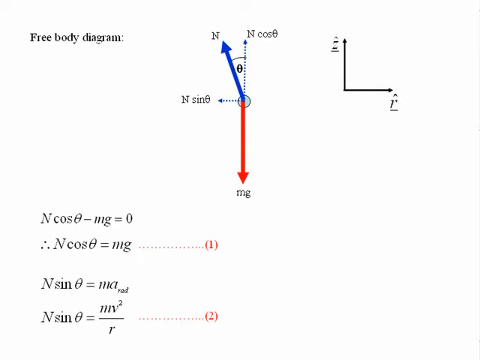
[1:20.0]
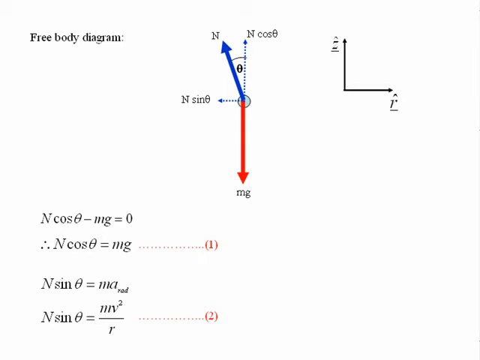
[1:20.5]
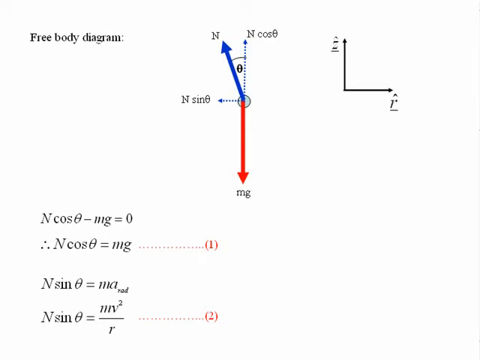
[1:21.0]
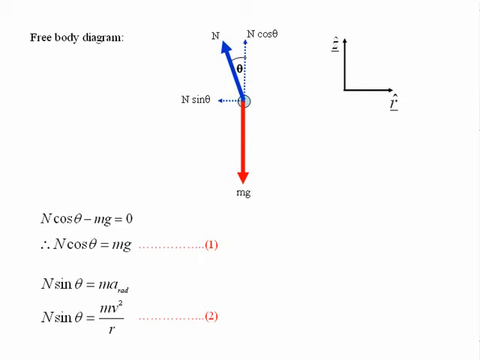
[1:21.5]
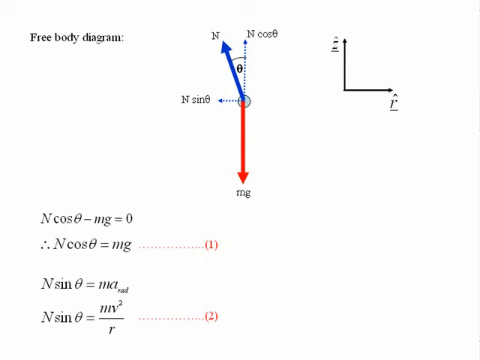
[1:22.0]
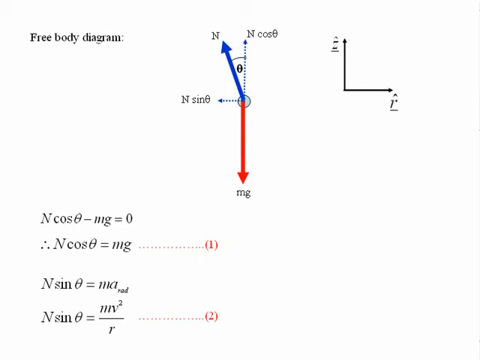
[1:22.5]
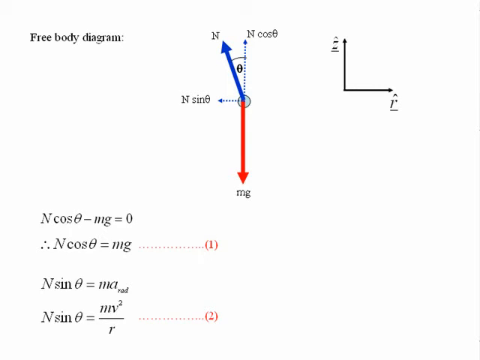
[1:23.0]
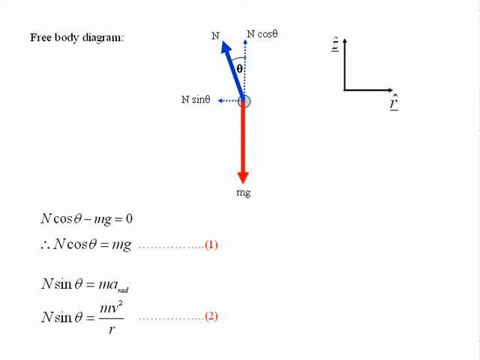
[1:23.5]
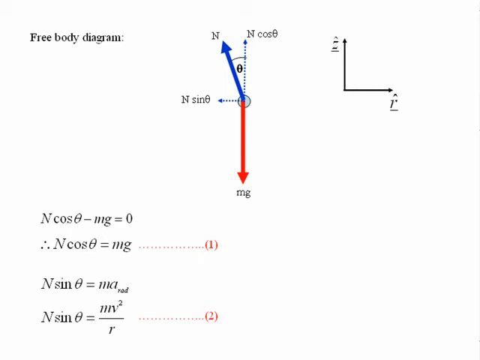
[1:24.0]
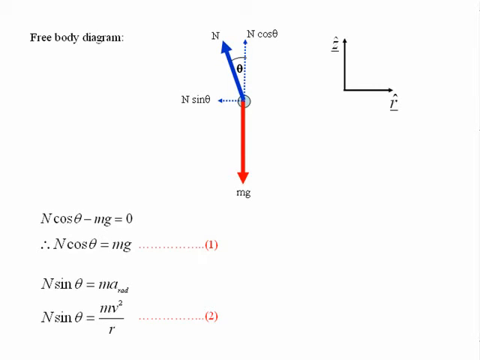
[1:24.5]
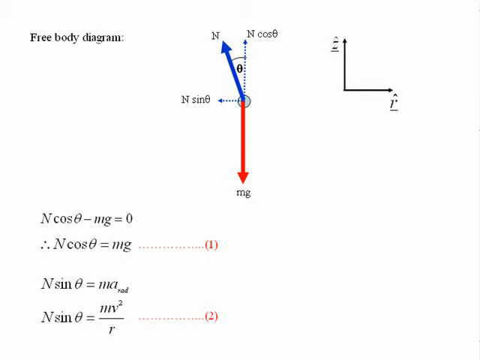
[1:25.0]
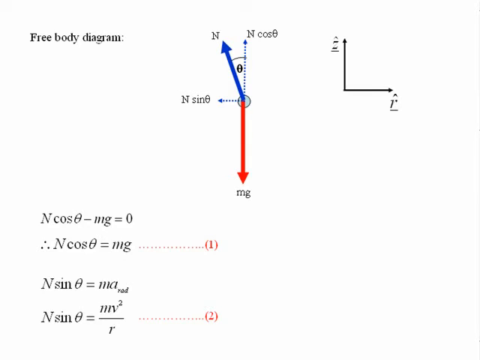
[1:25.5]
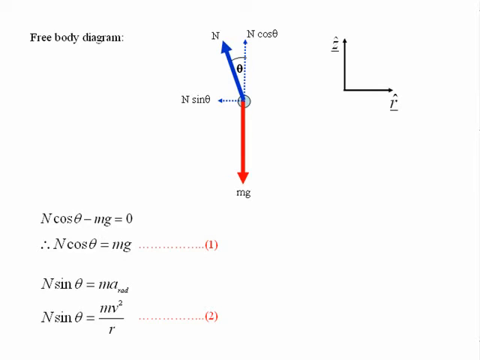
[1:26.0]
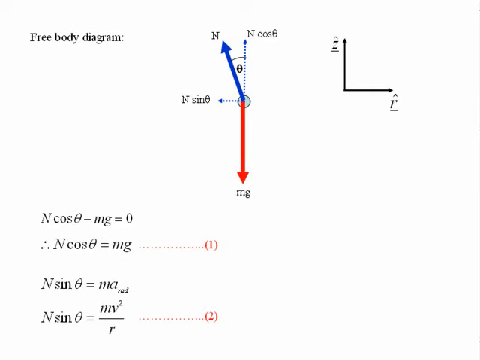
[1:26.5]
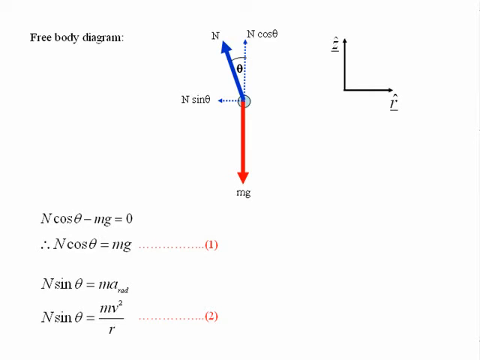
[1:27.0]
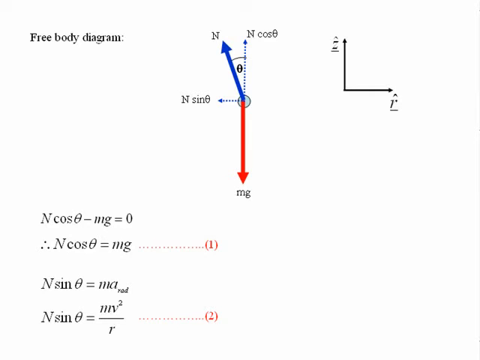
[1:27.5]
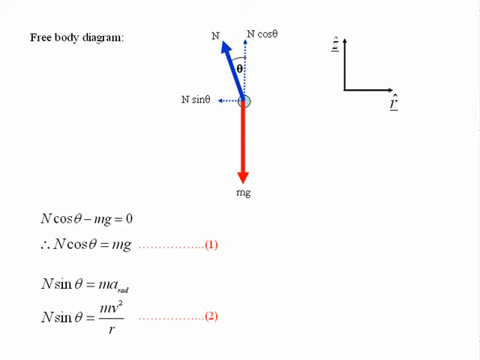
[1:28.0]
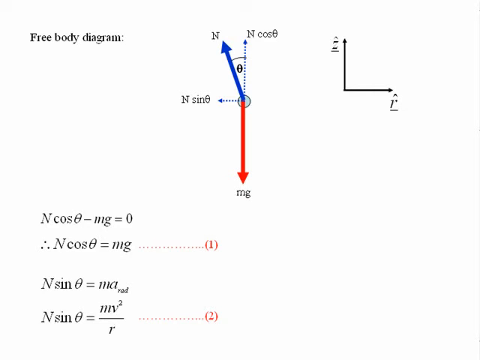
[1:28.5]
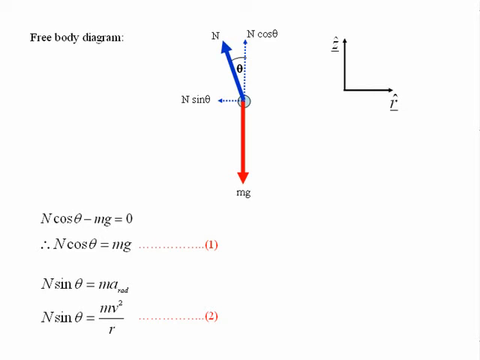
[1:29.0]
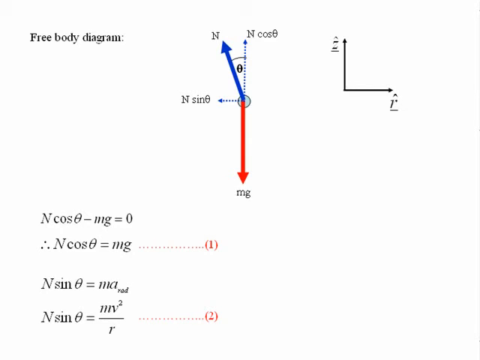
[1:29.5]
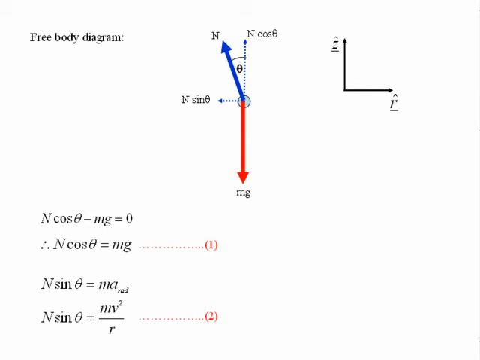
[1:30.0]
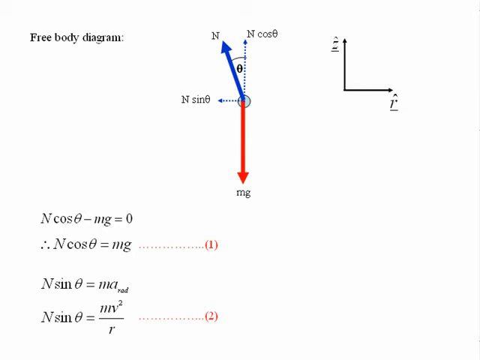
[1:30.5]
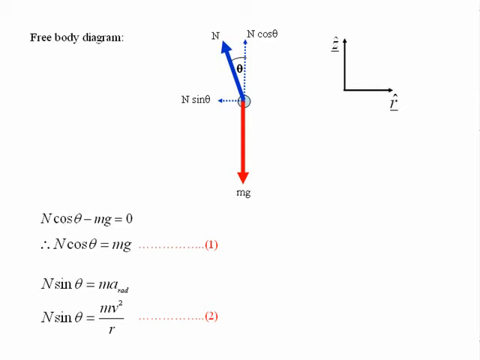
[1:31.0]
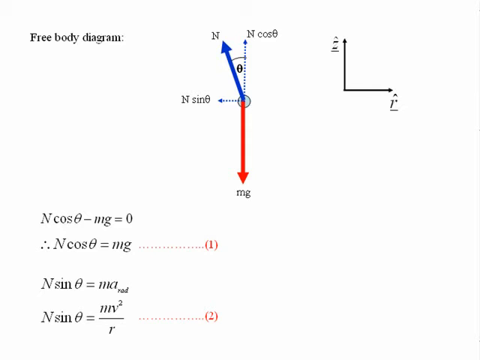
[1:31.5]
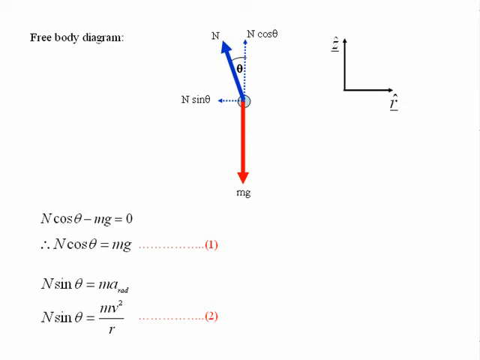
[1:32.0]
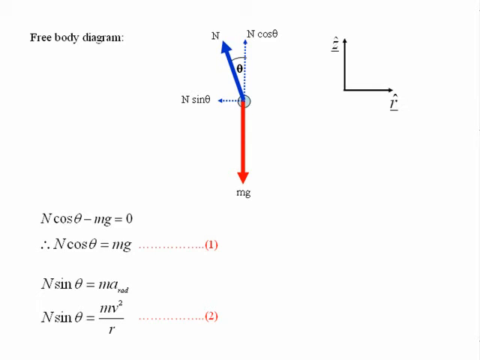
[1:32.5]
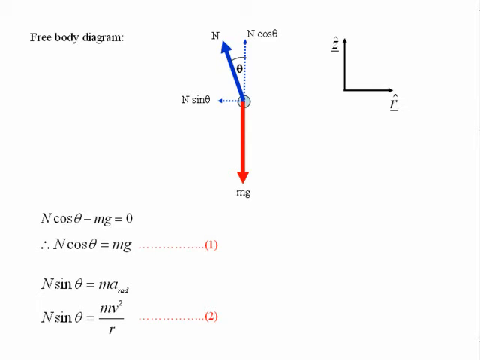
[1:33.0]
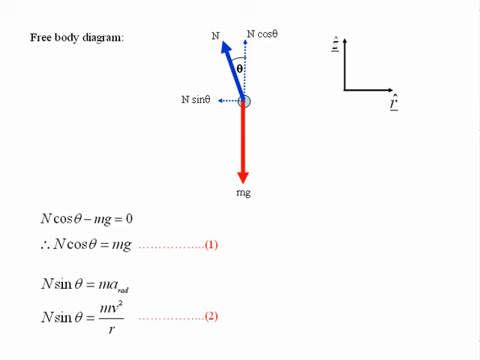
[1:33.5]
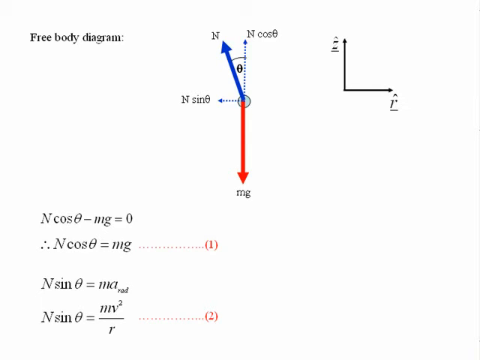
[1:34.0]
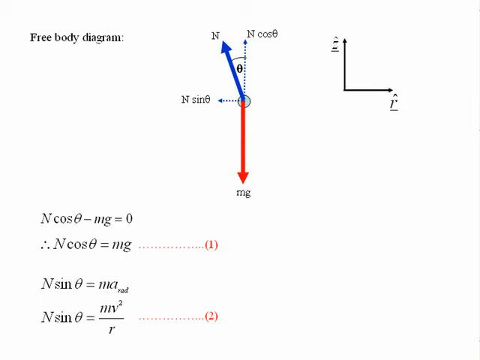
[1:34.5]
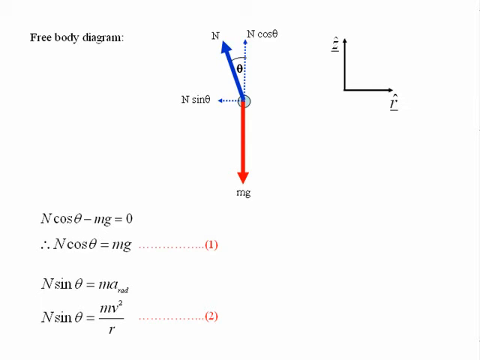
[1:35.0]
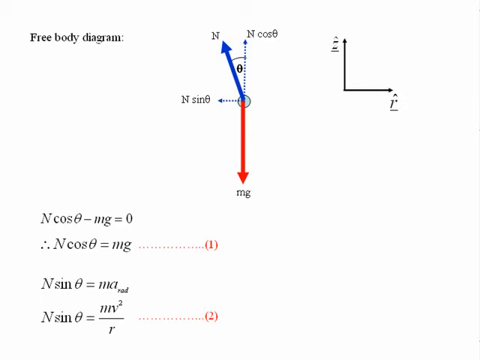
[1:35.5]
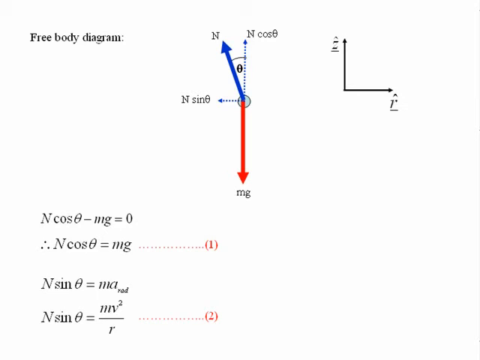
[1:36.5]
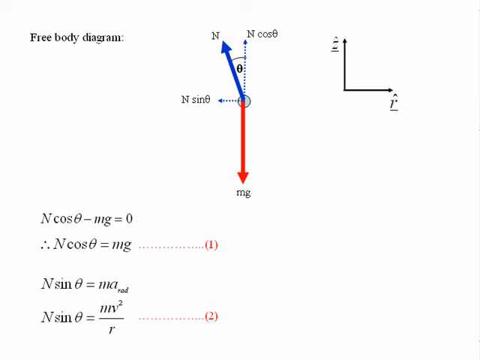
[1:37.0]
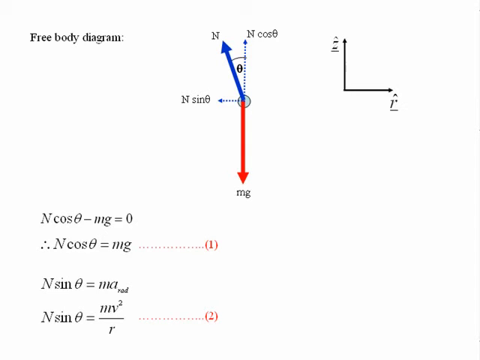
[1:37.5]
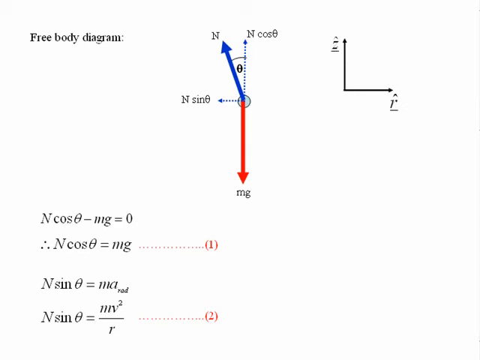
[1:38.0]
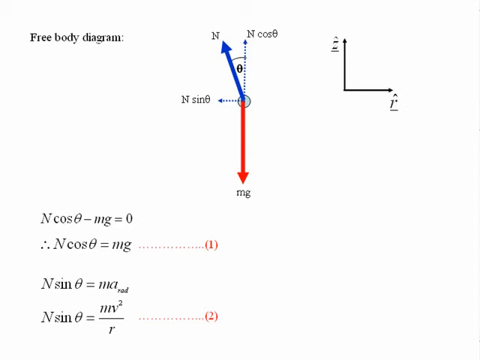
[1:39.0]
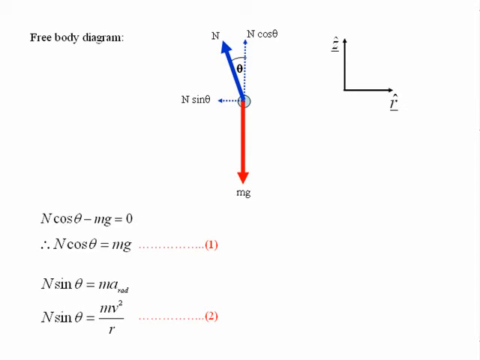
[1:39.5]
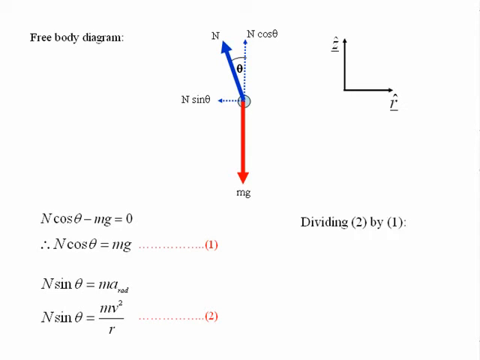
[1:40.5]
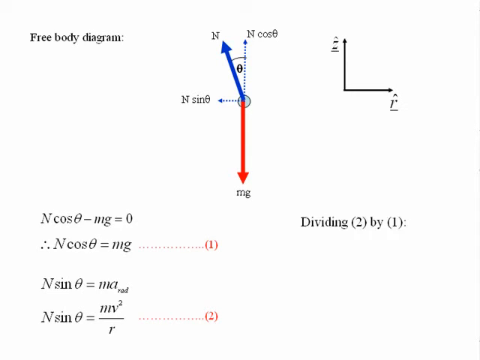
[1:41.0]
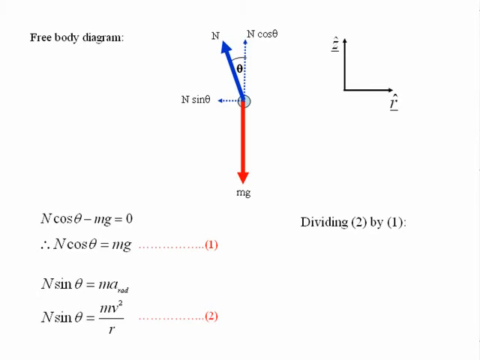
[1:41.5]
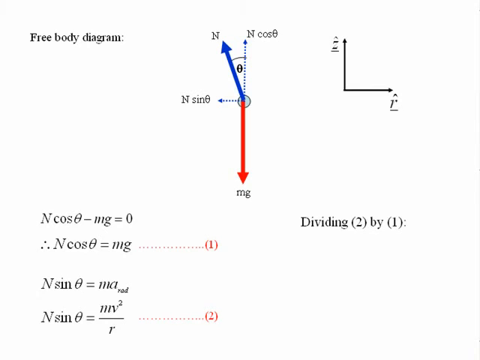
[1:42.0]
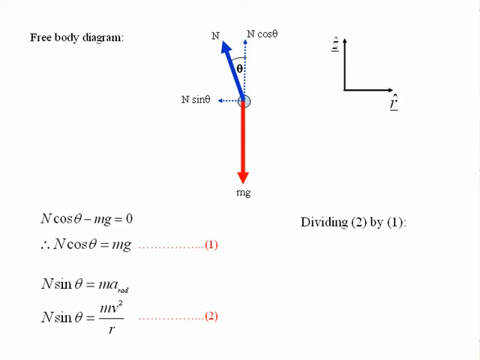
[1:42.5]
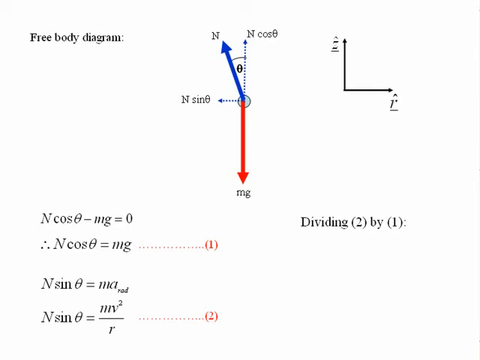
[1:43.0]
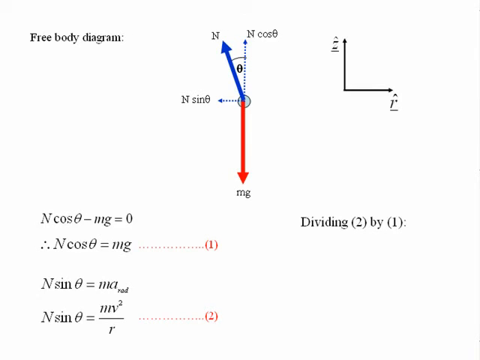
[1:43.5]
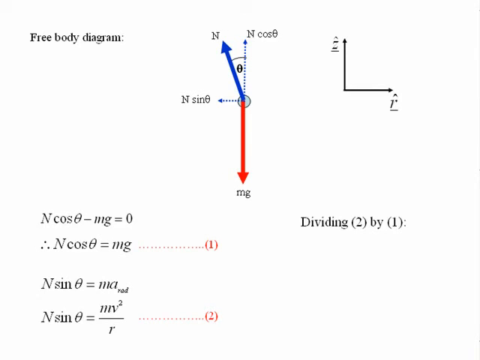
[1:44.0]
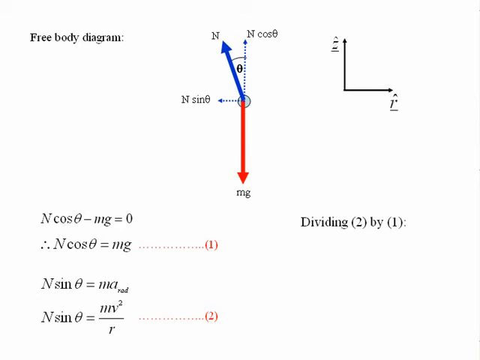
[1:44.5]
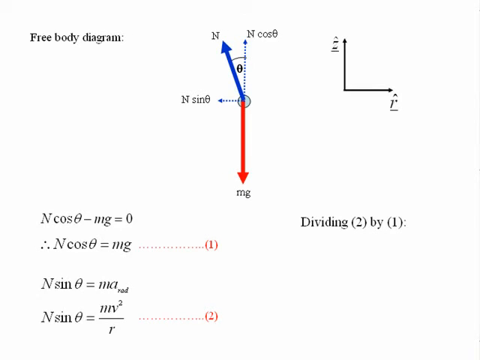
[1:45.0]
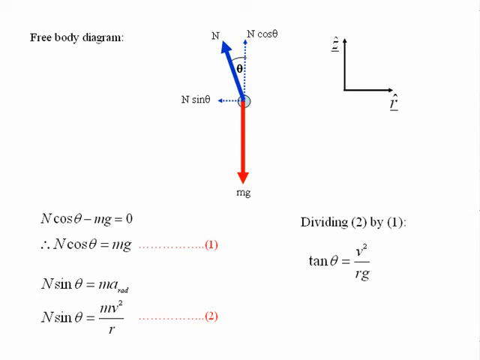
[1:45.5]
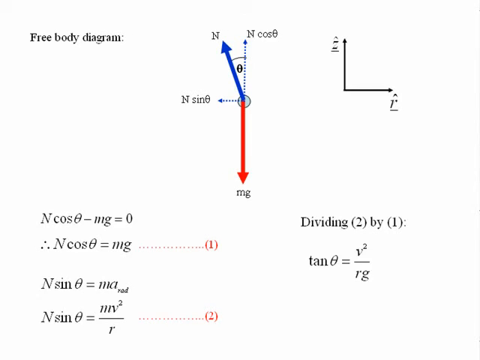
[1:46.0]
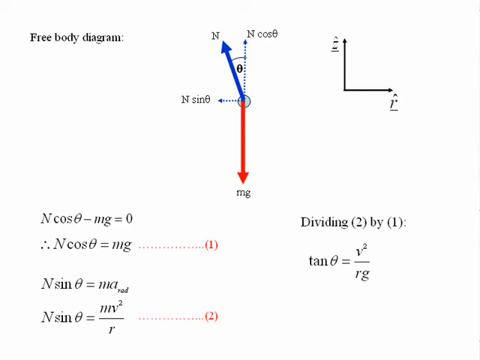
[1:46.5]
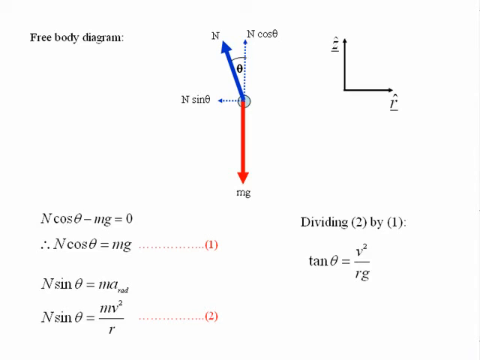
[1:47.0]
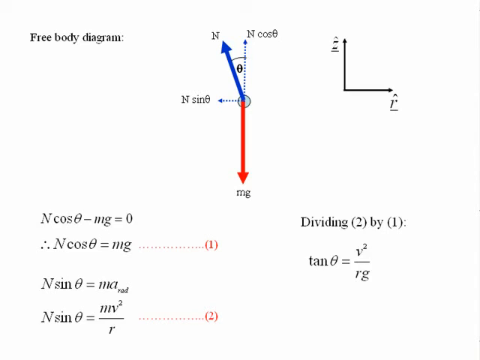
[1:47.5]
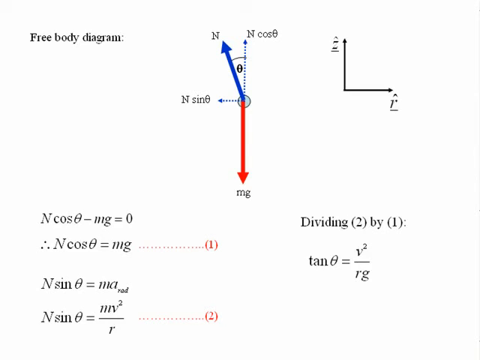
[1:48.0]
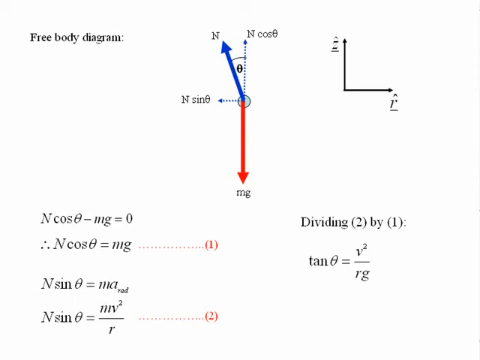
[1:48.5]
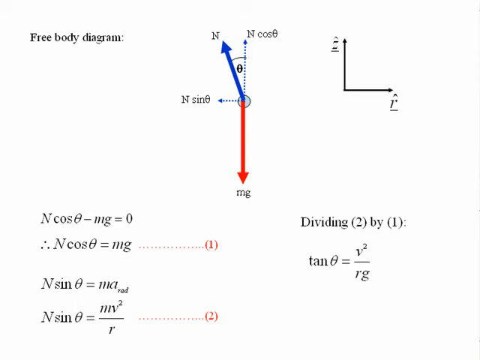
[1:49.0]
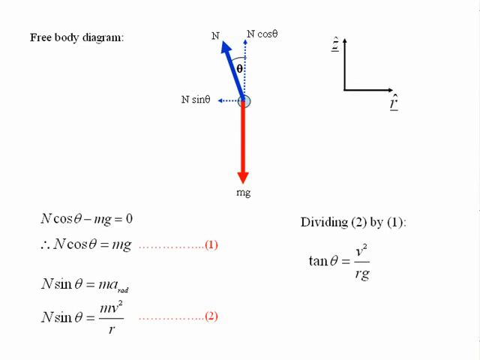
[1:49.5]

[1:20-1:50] Several arrows are shown, including a red and blue arrow pointing left and the red arrow pointing down, with two equations visible on the screen. Black text kind of appears in the bottom right-hand corner, showing the working of dividing two by one, with tangent in the equation, presenting some sort of trigonometry and angle information. The setting does not change, and no humans or animals appear.